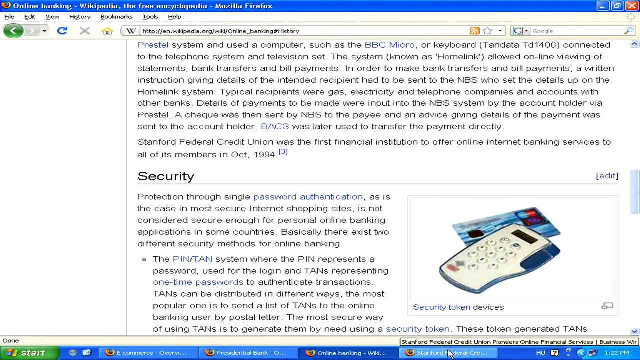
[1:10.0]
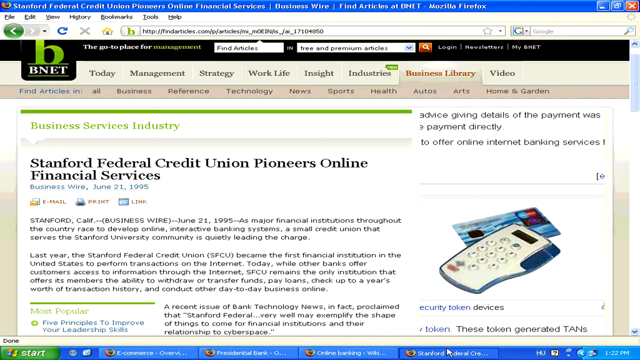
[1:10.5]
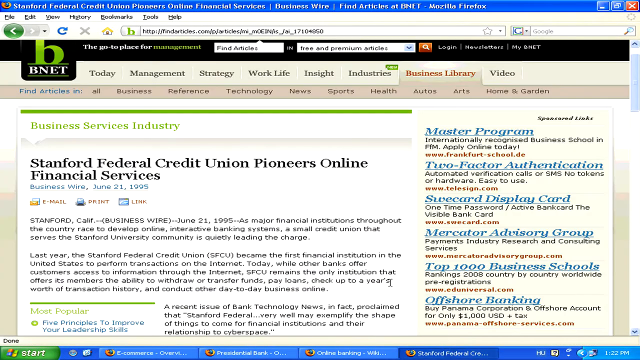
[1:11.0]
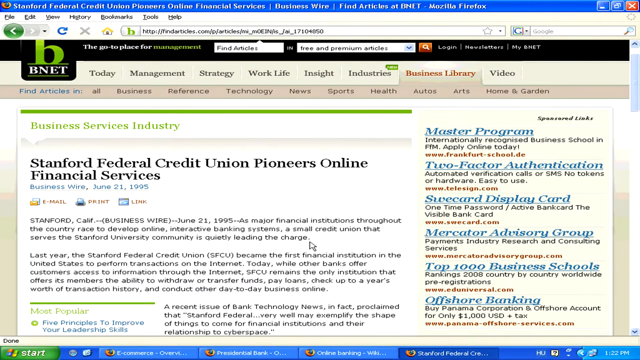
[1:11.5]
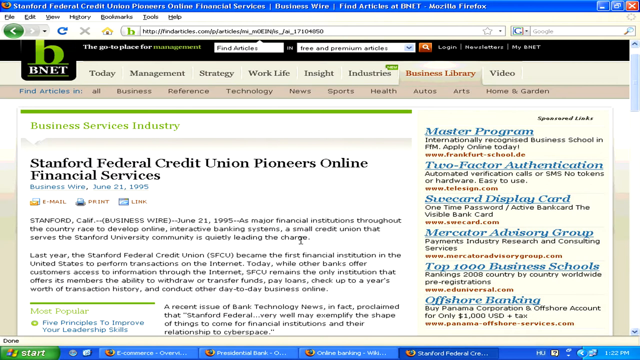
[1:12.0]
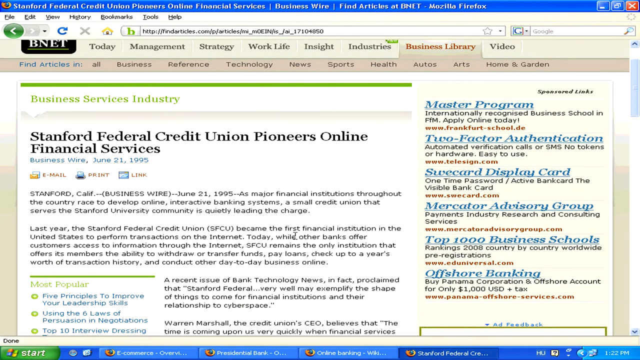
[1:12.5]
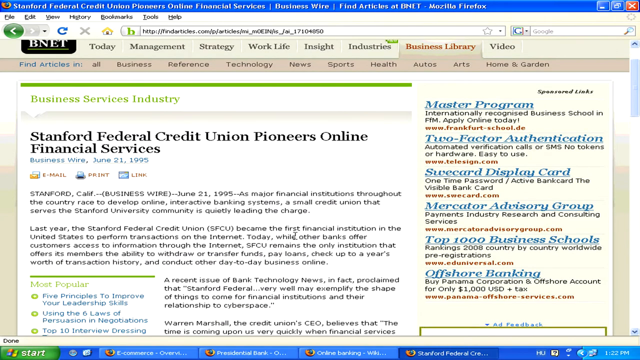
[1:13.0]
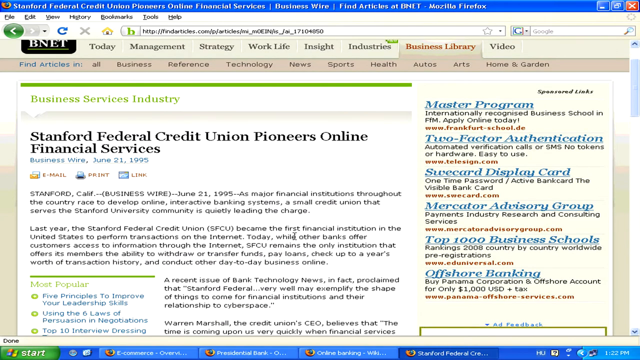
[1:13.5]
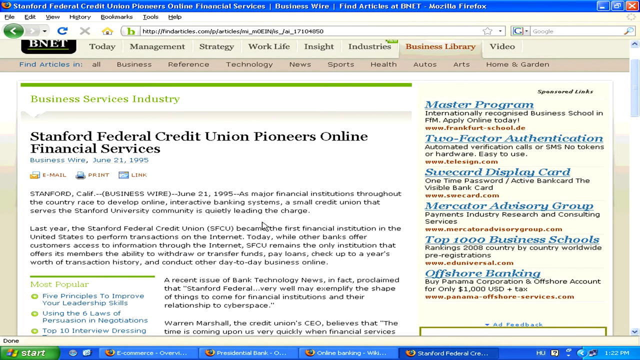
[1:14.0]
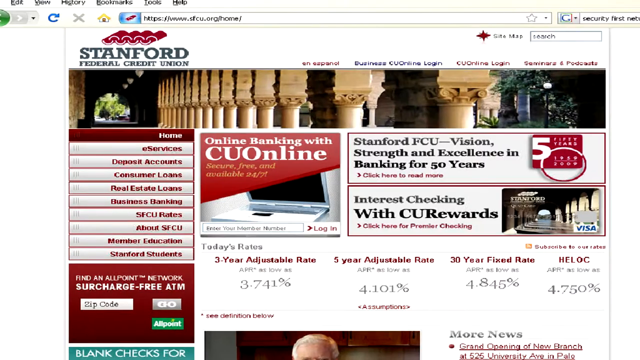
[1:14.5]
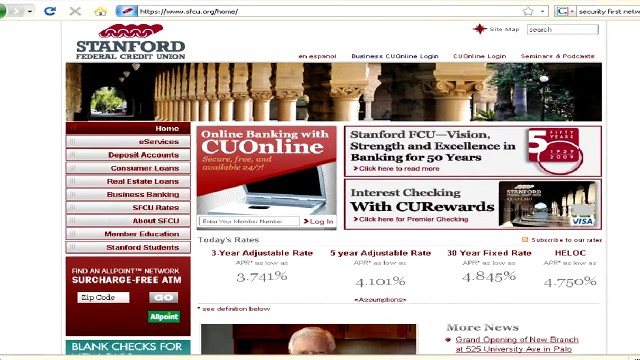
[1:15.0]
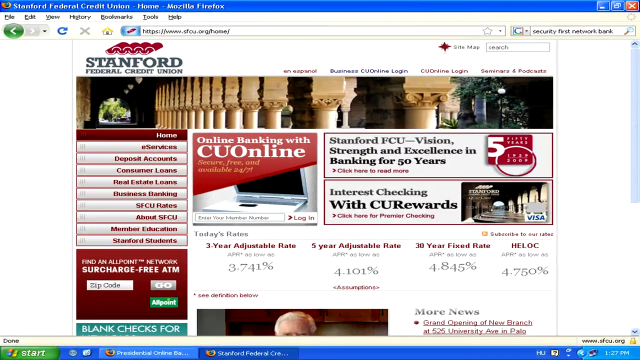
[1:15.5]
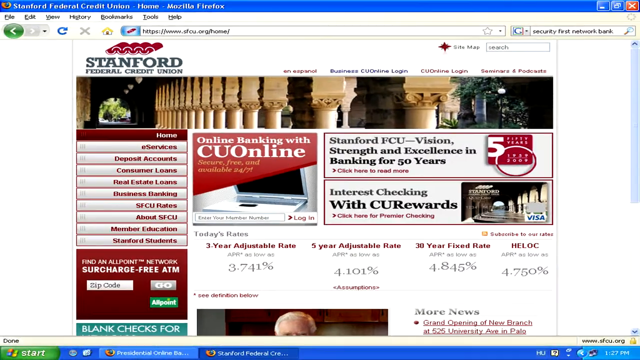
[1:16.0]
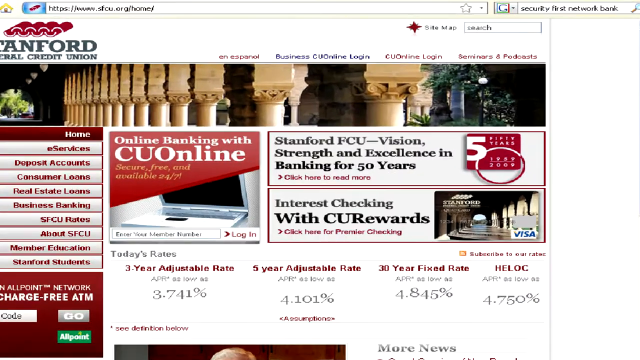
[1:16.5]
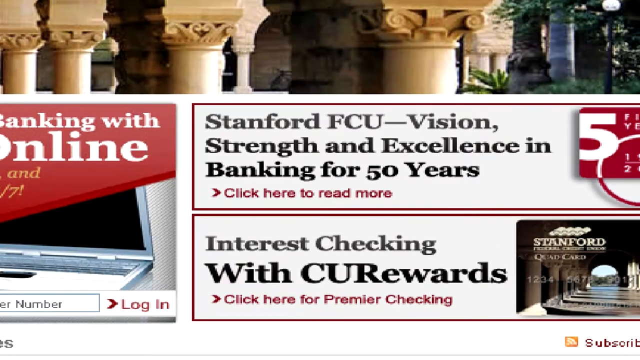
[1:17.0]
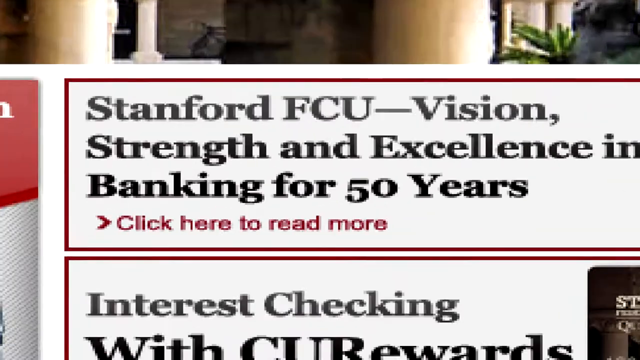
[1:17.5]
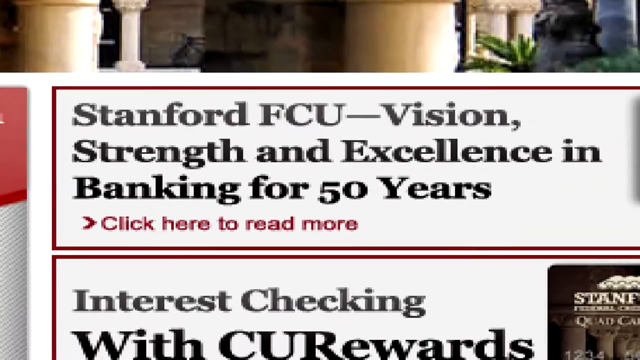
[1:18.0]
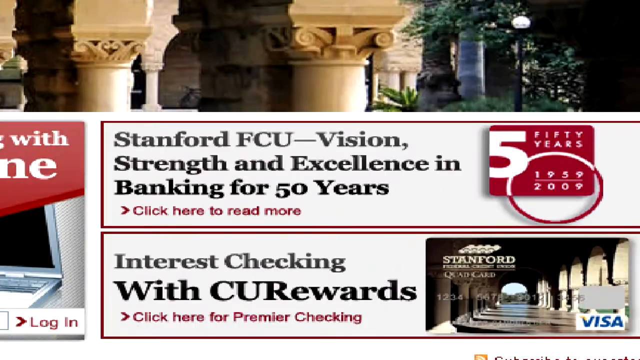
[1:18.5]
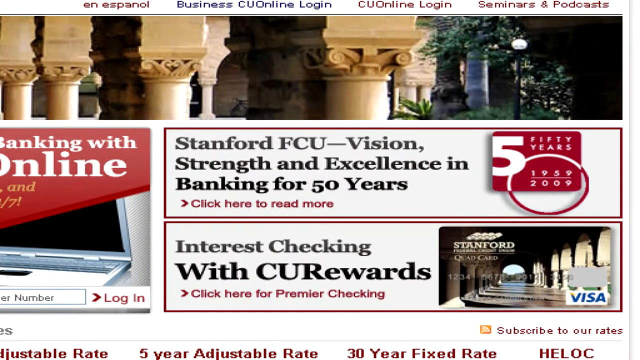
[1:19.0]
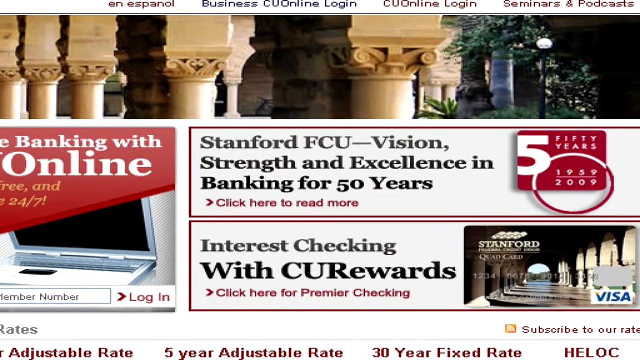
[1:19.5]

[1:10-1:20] An article titled "Stanford Federal Credit Union Pioneers Online Financial Services," dated June 21, 1995, is shown. It states that Stanford University is leading the online banking systems, and that last year Stanford Federal Credit Union became the first financial institution in the United States to perform transactions on the Internet. The video then goes back to the Stanford Federal Credit Union site, which says they have been banking for more than 50 years.